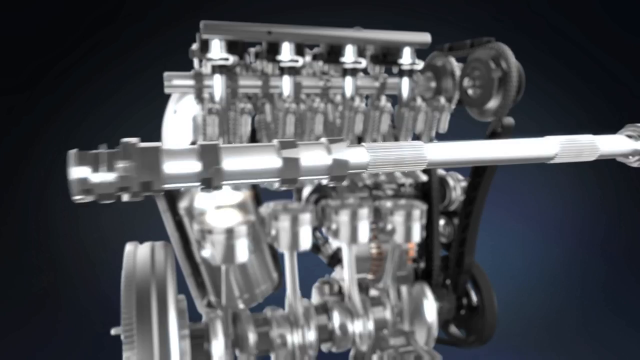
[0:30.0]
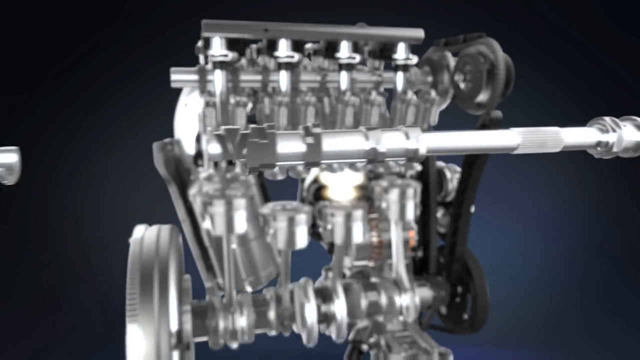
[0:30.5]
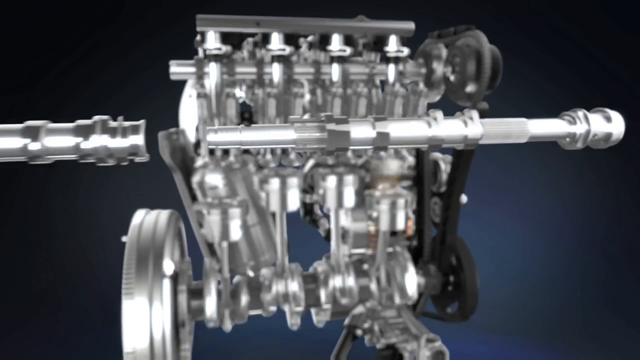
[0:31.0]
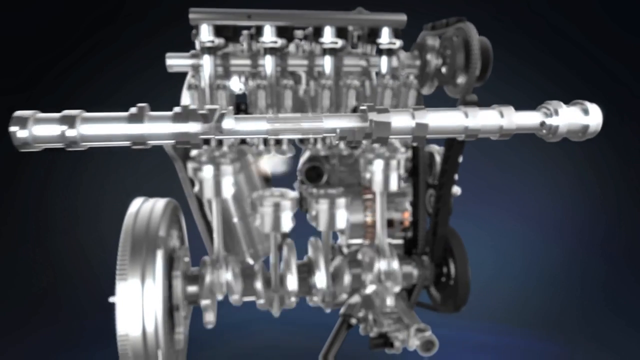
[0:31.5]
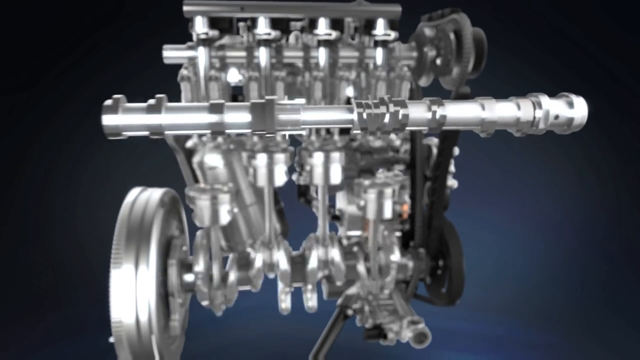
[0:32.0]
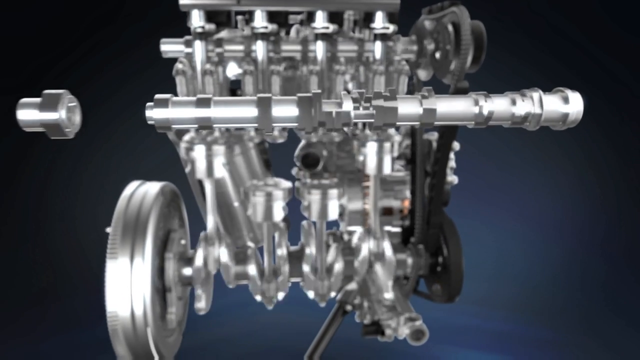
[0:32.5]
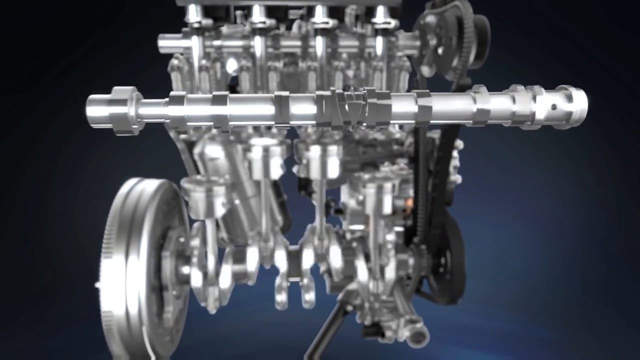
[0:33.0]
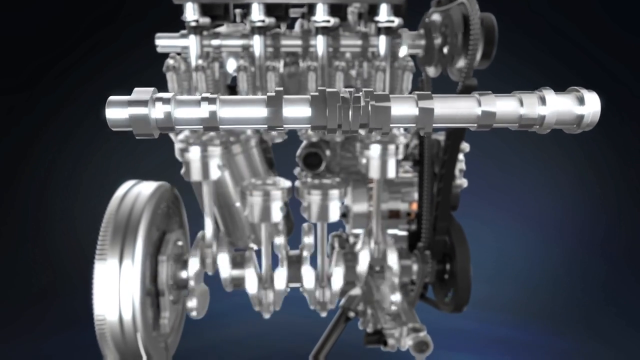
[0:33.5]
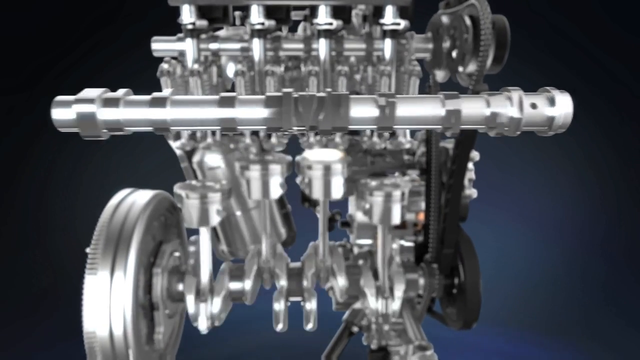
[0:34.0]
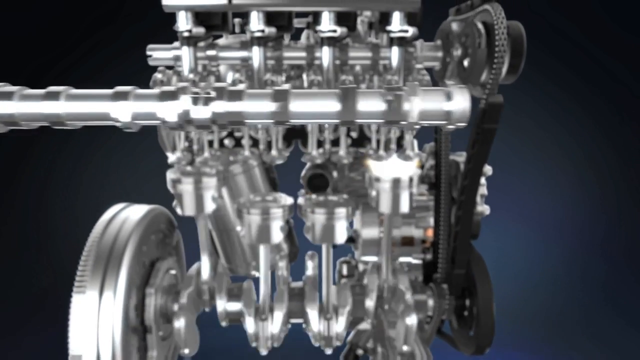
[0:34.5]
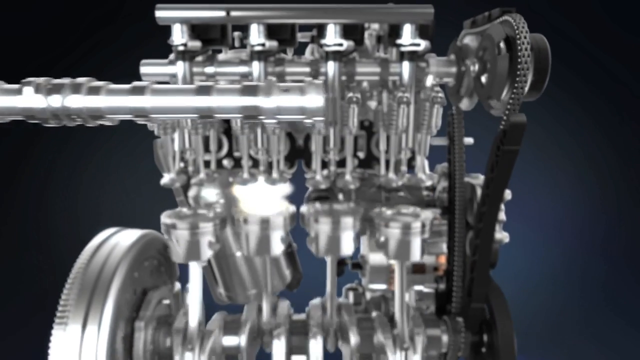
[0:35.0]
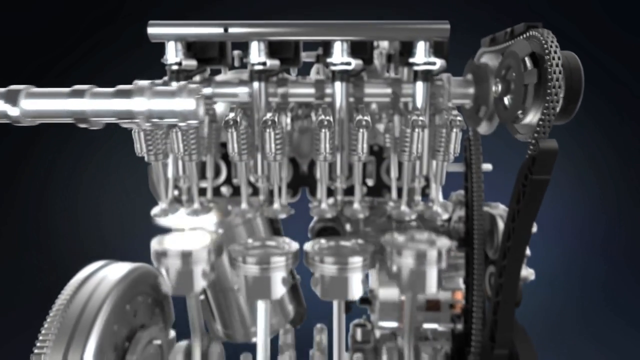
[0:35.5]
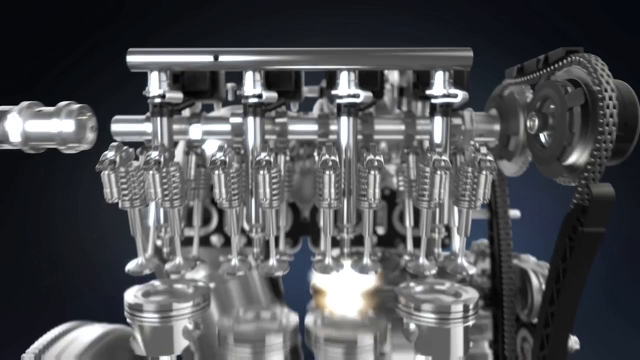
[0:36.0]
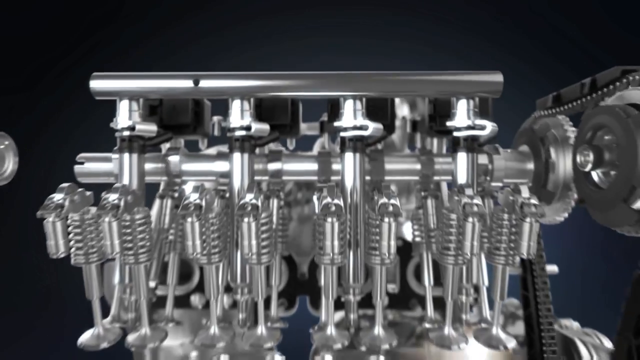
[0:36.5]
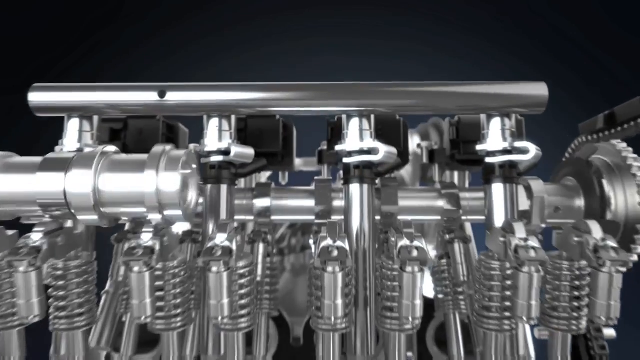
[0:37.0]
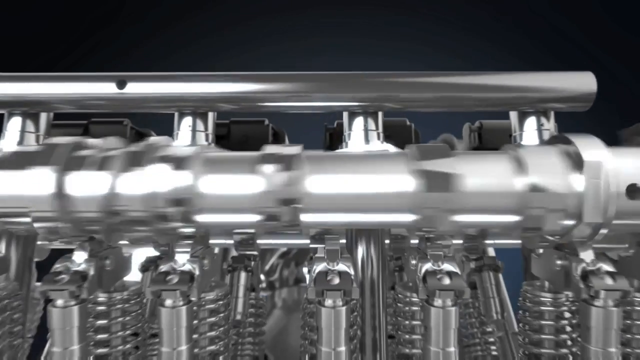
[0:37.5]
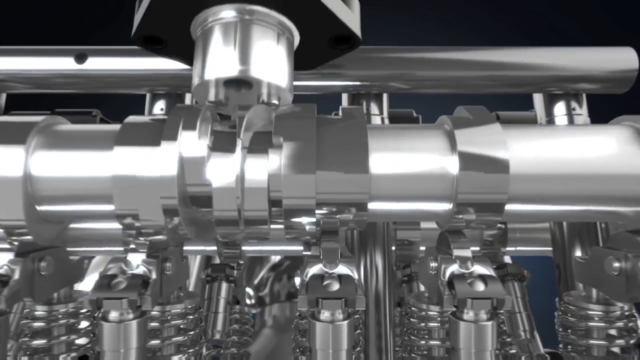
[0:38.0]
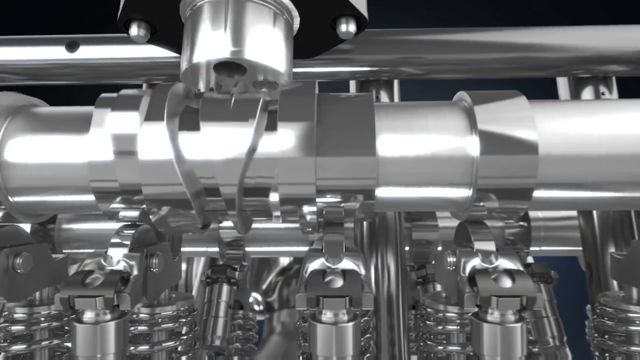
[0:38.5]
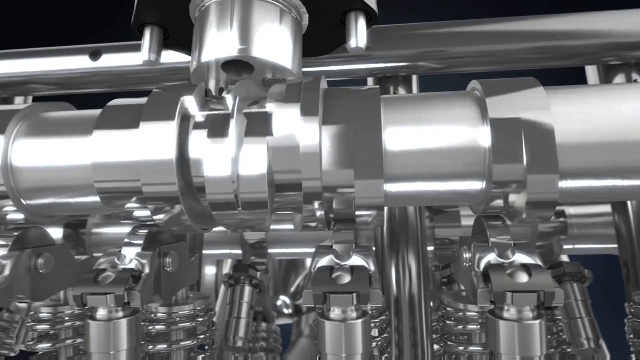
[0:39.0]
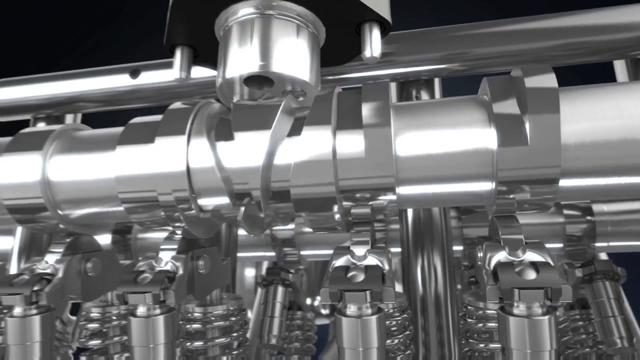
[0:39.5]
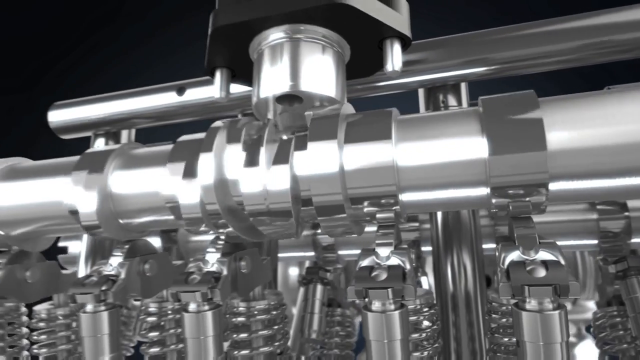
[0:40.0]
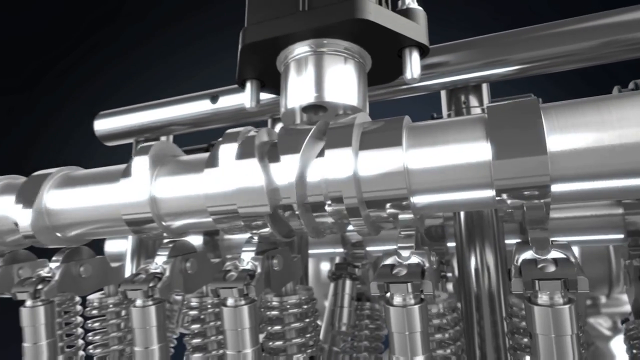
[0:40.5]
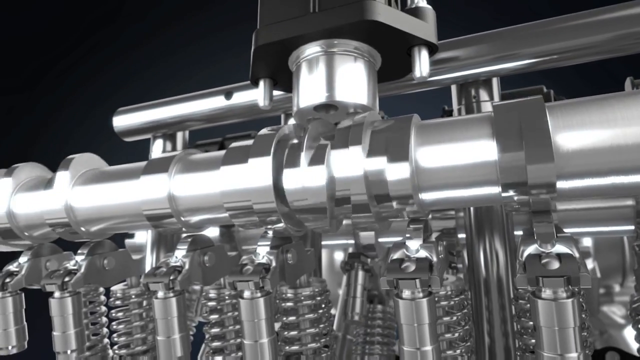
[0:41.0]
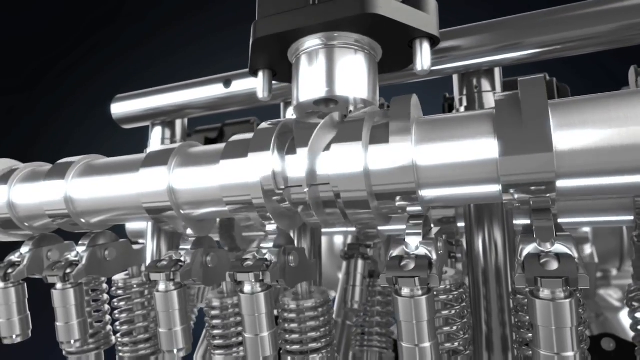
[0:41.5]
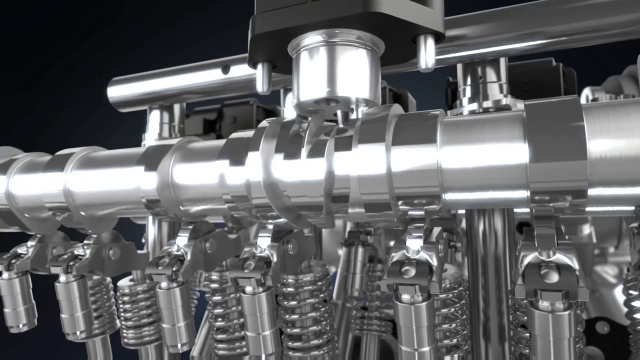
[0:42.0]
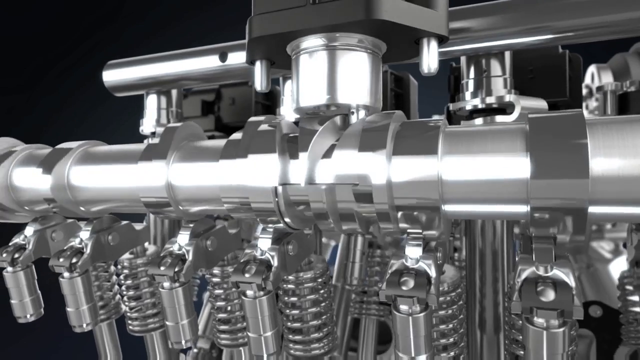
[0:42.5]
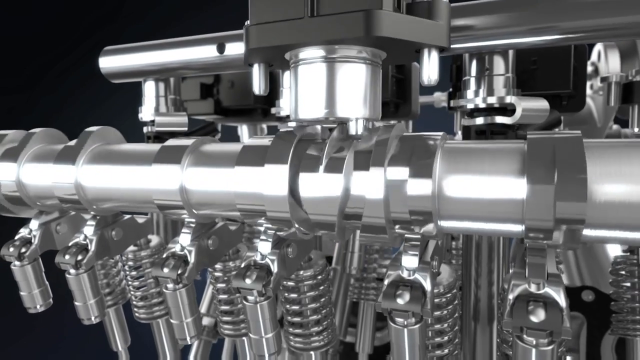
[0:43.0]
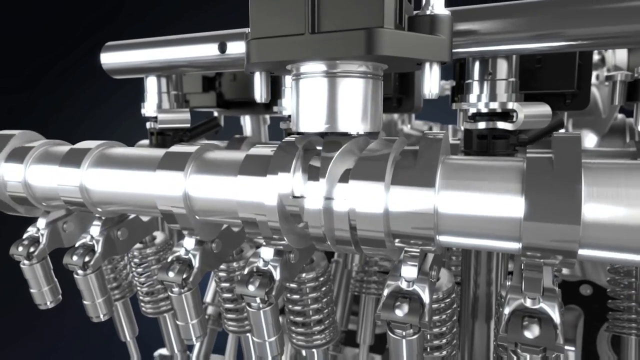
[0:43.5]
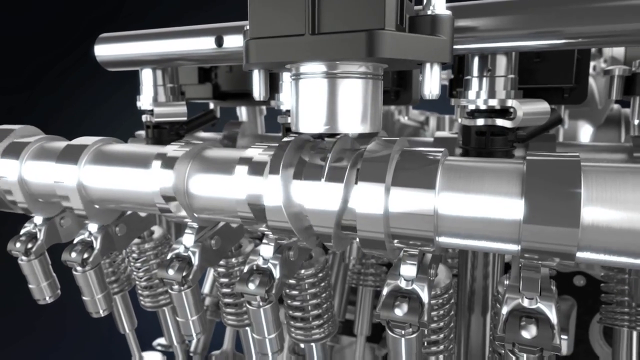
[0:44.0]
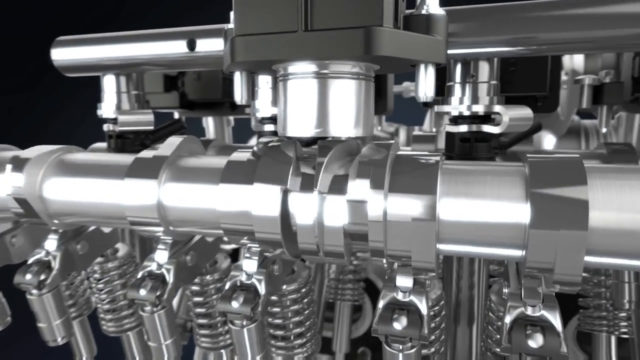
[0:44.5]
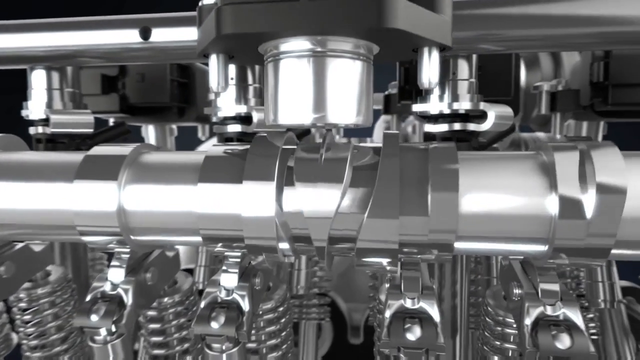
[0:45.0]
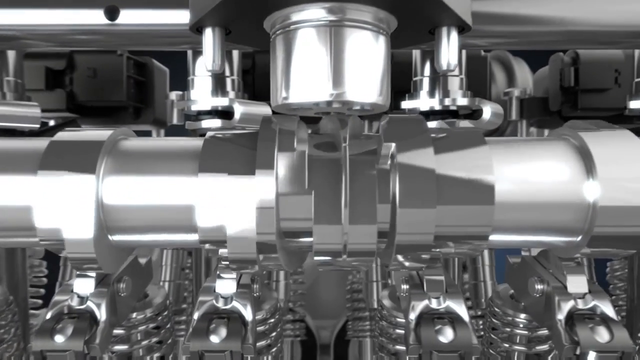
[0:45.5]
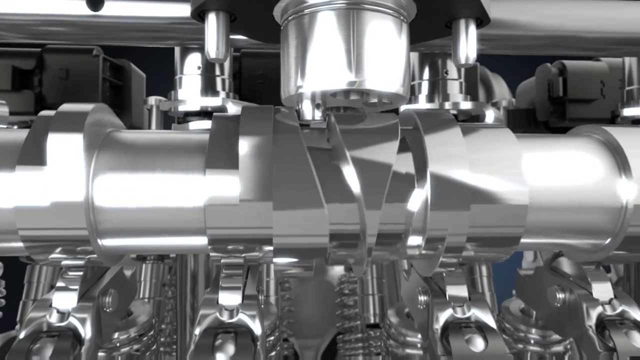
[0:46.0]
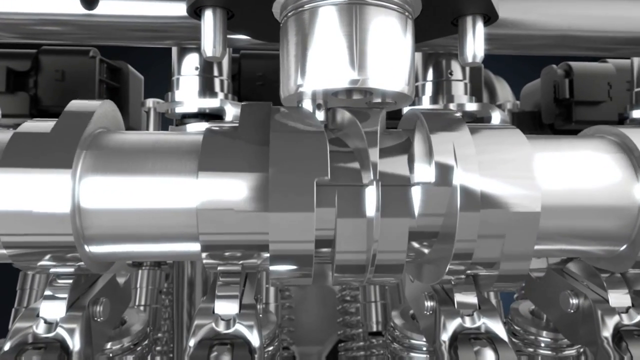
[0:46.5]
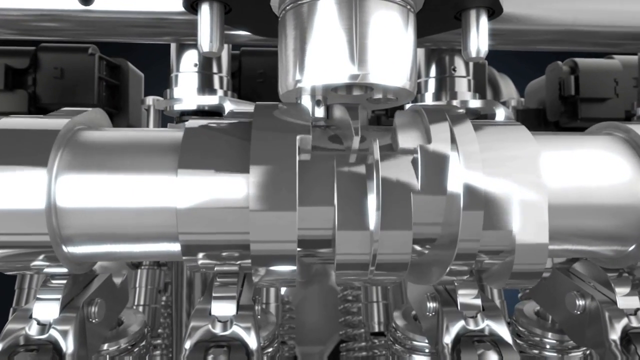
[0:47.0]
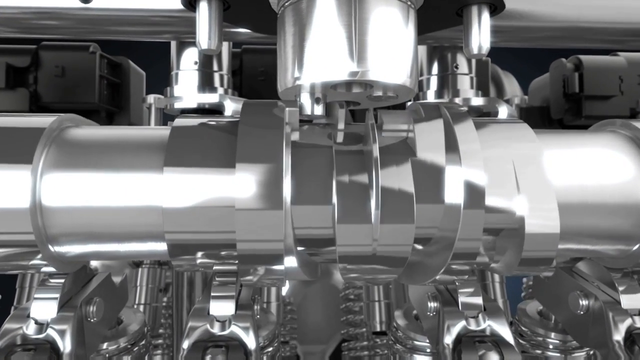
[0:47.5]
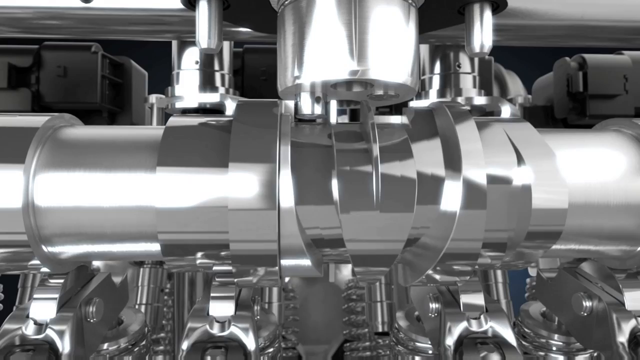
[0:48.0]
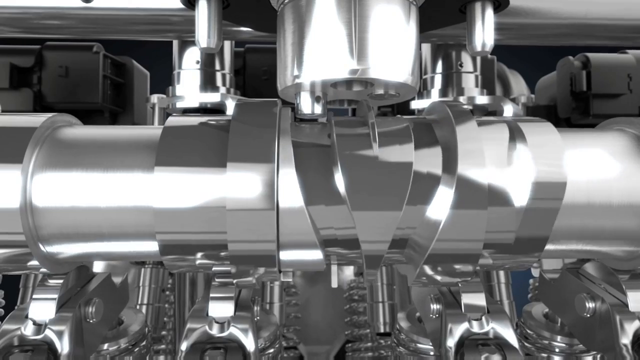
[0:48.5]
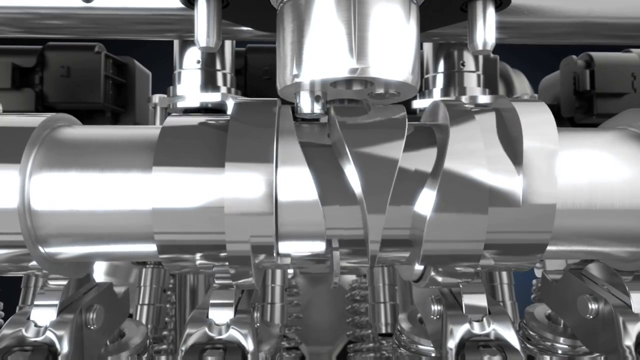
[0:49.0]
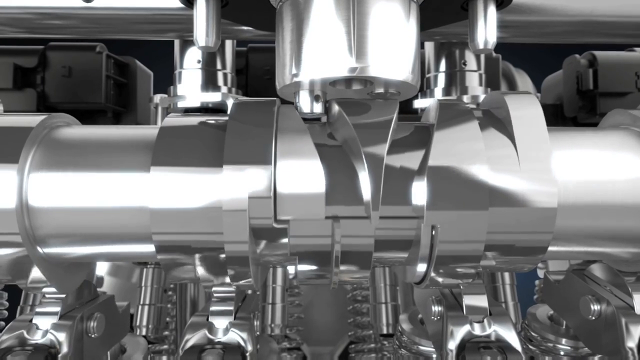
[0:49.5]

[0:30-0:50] The inner workings of an engine are visible as cylinder, pen-shaped parts seem to hook together, and then the view moves back to reveal other chrome devices. The footage appears digitally produced, with sections moving through the background, and it seems slowed down slightly so that the changes right in the middle, where different pieces hook together, can be seen. The view zooms in, and in the middle some of the objects turn and spin, showing how it all fits together. The background is mostly black, and the shading makes some of the chrome areas look almost white.